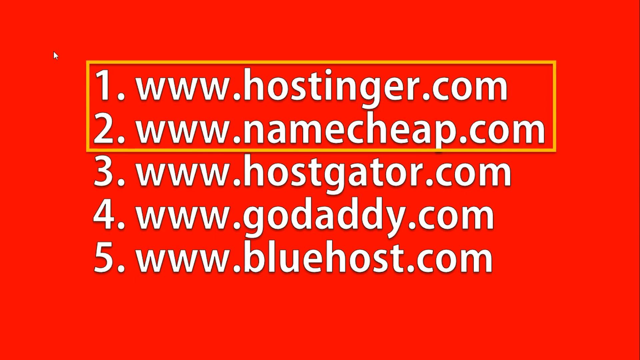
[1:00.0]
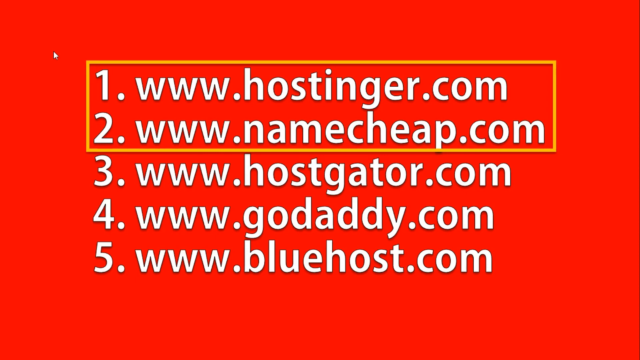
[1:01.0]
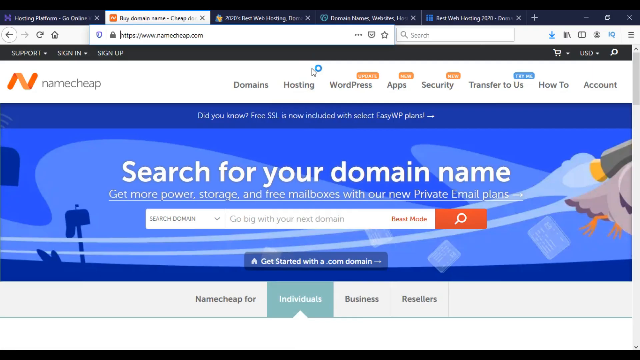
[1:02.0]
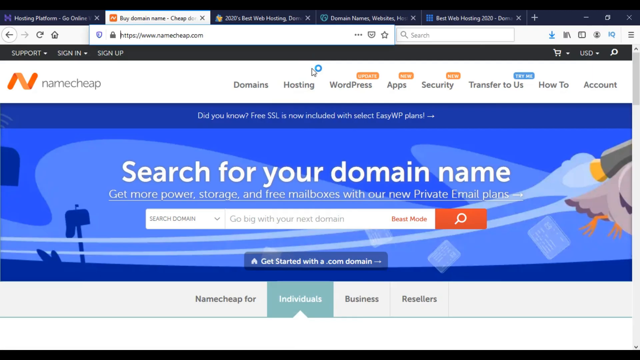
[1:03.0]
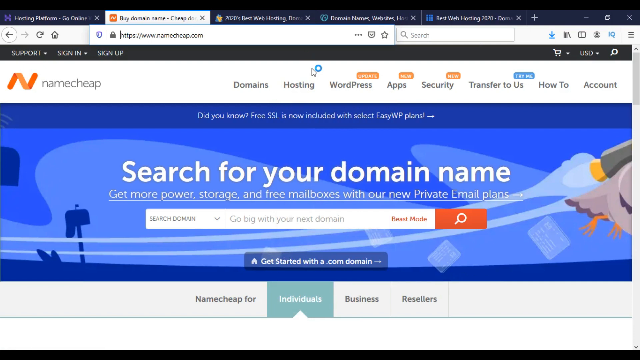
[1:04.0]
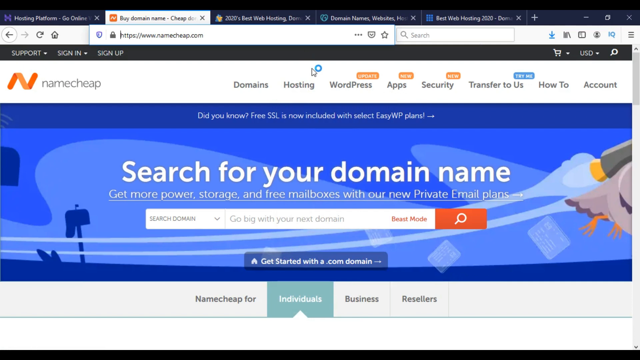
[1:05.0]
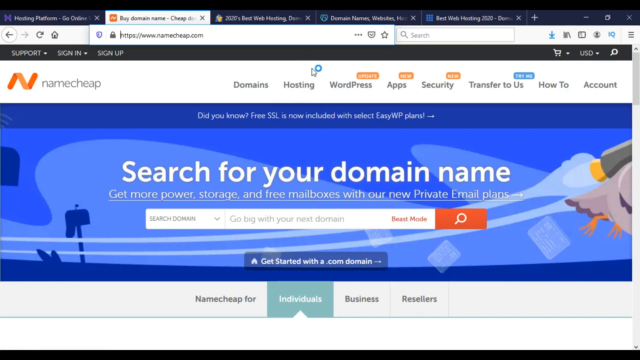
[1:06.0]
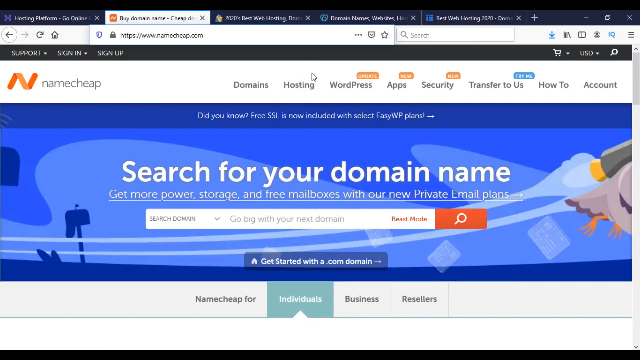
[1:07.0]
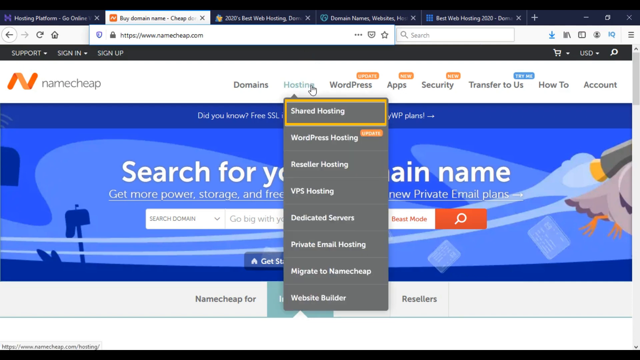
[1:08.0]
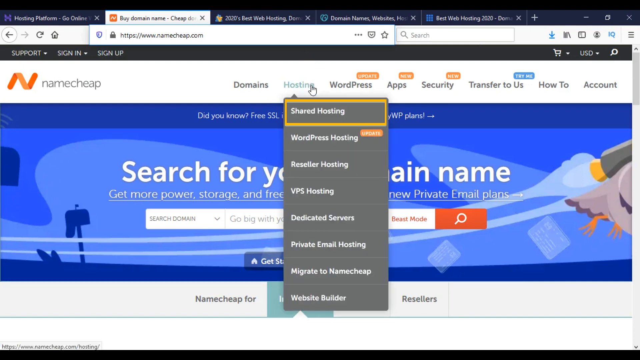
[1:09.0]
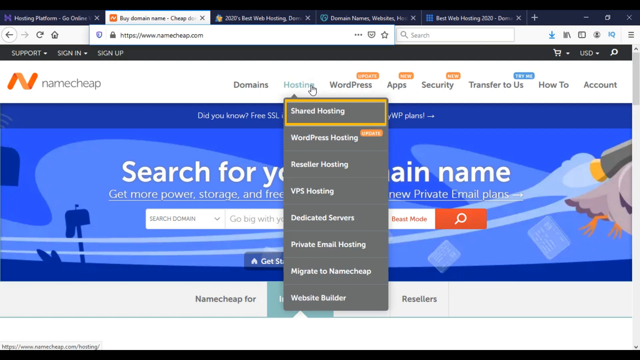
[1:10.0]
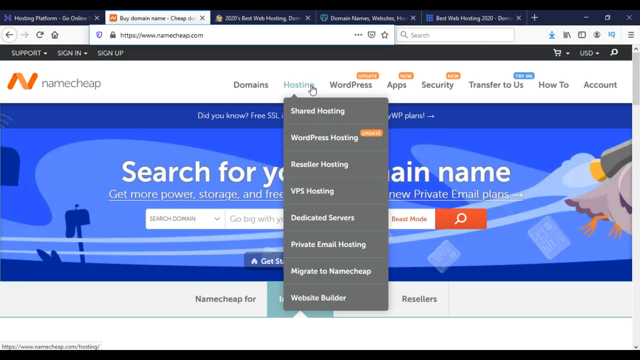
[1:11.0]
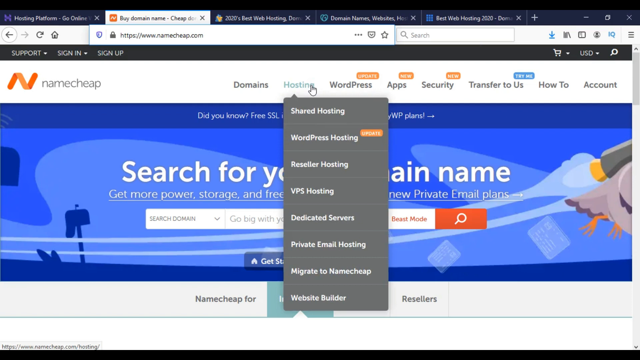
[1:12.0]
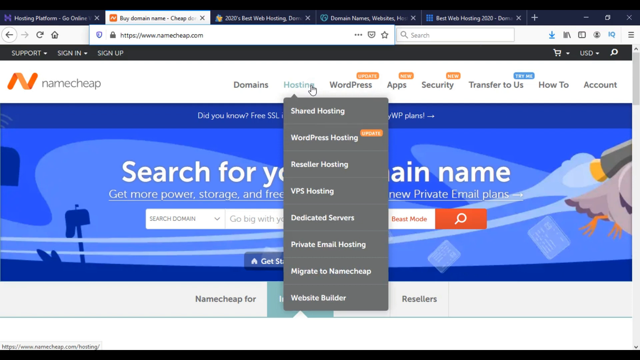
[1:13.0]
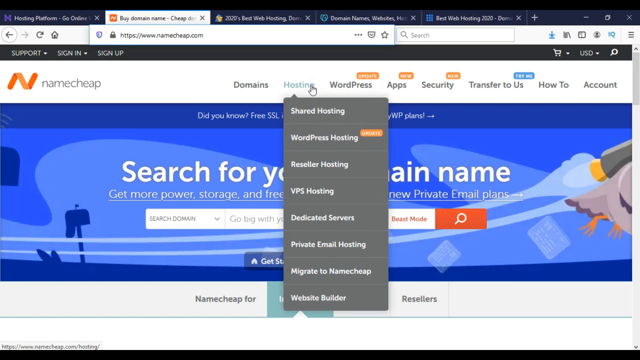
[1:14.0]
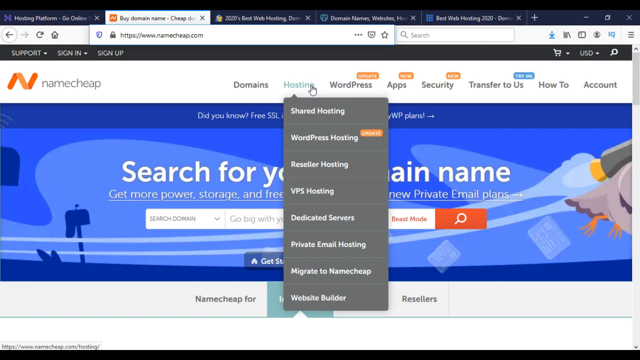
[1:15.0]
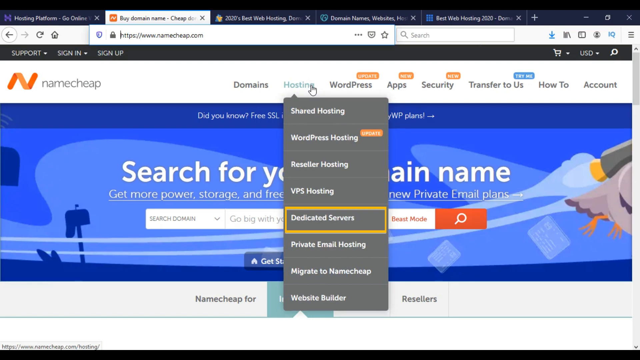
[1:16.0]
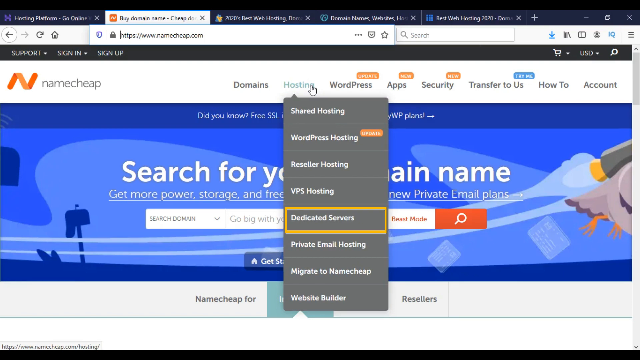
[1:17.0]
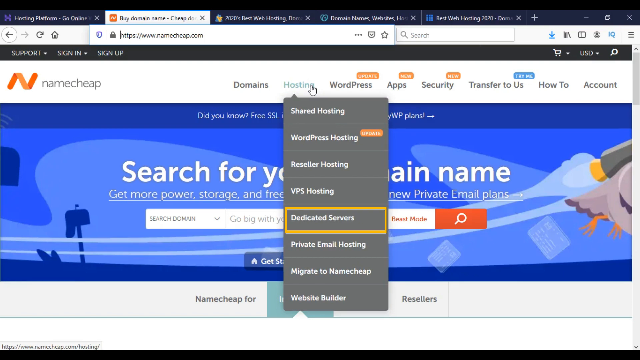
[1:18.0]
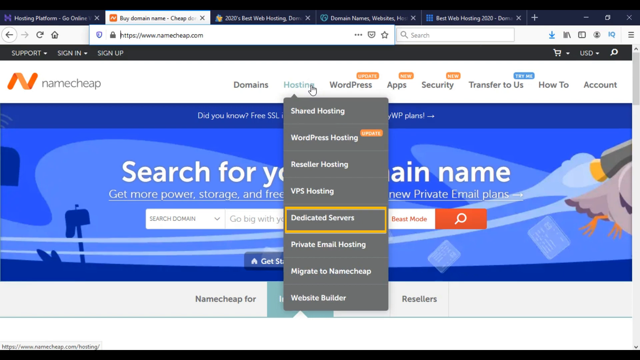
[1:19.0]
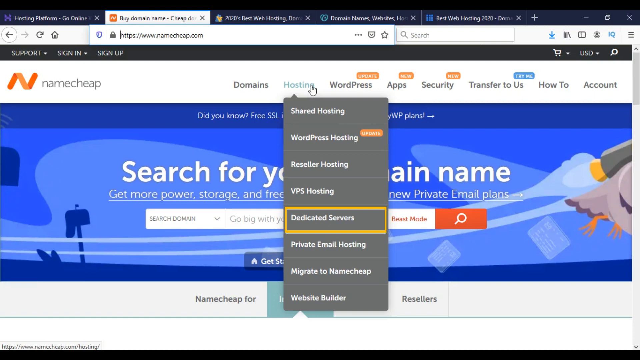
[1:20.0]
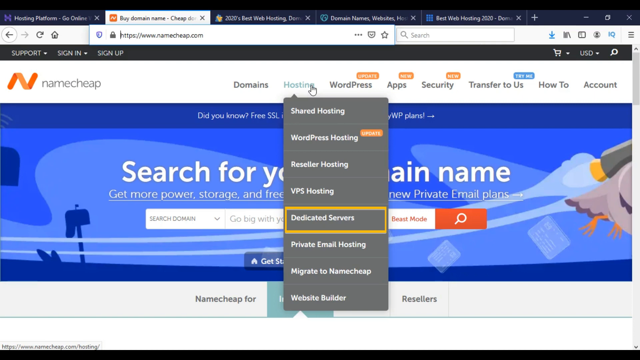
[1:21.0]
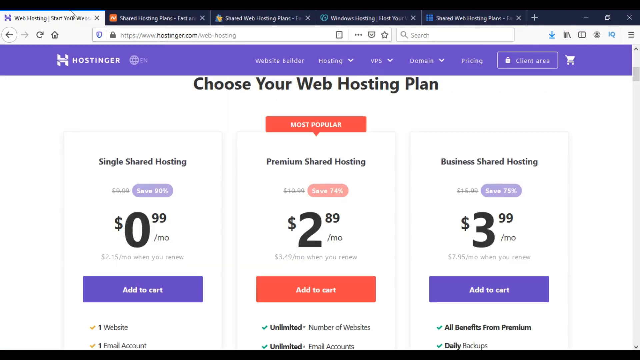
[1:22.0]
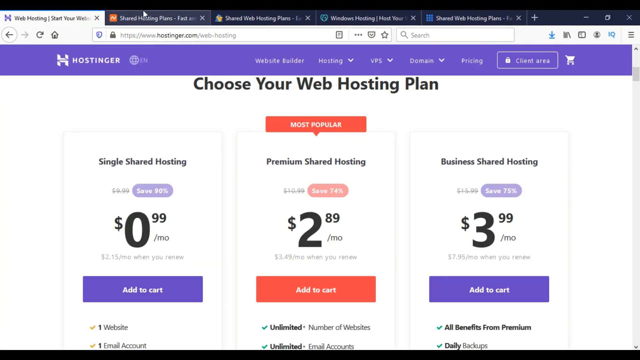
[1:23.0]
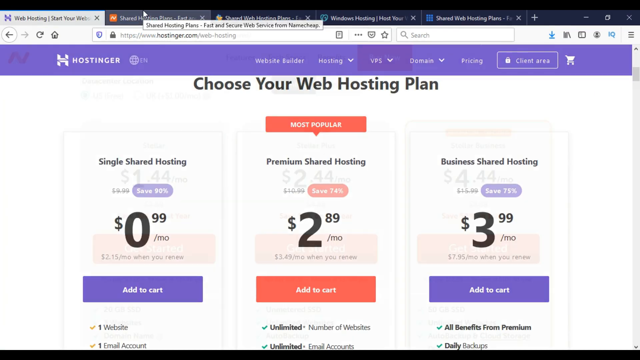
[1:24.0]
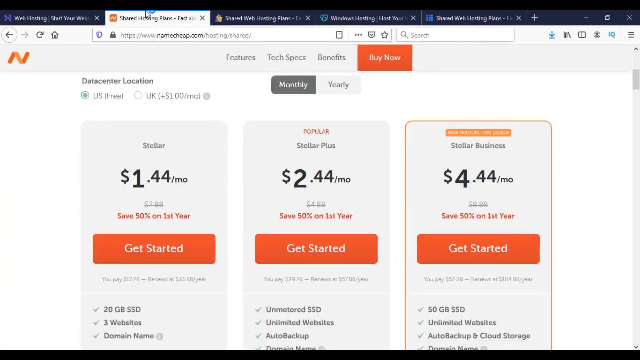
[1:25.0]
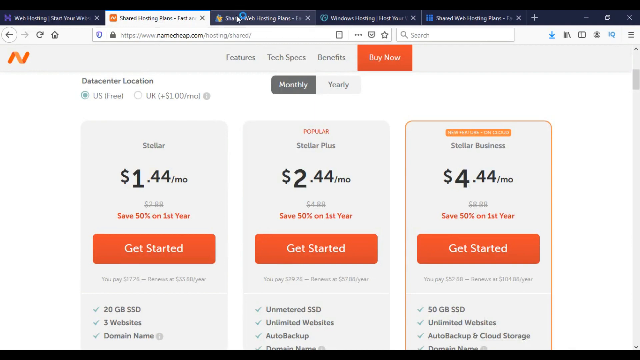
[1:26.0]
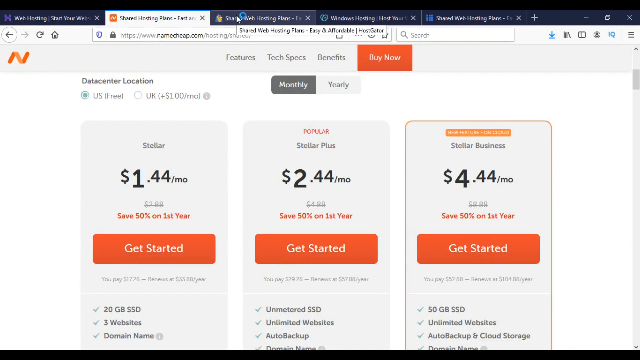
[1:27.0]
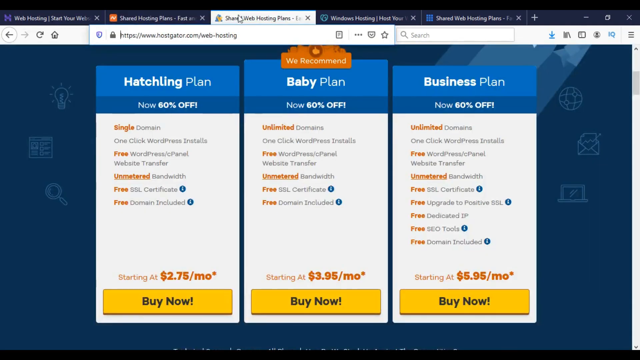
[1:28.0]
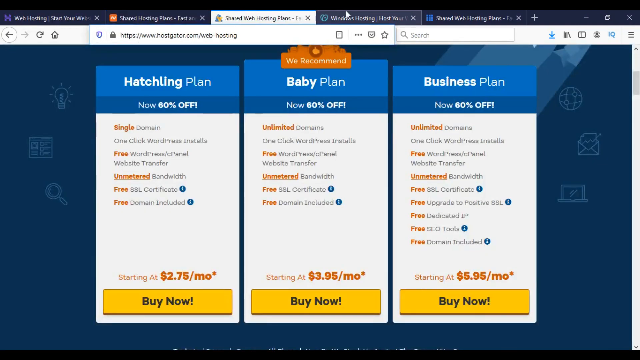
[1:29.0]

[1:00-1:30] A solid red page lists the numbers 1 through 5 with websites beside them: number 1 says "www.hostgator.com," number 2 says "www.namecheap.com," number 3 says "www.hostgator.com," number 4 says "www.godaddy.com," and number 5 says "www.bluehost.com." The presenter pairs number 1 and number 2 to compare them, and the screen says "search for domain names." He goes to a website showing how to search for a domain name on cheapnames.com. Next he goes to another page with a large N up in the corner and monthly pricing of $1.44, $2.44 and $4.44 a month. He then opens another page showing the hatchling plan and three other plans. After that, the video goes back to the red page listing the names of all the websites again.